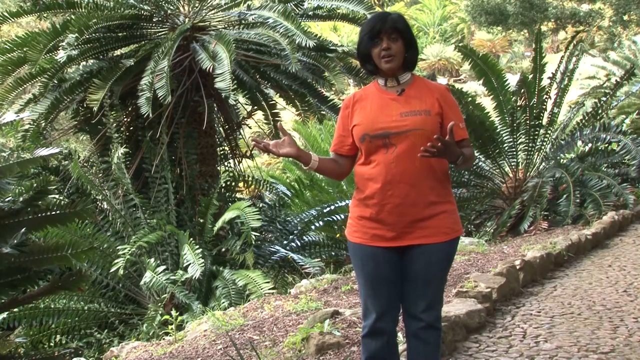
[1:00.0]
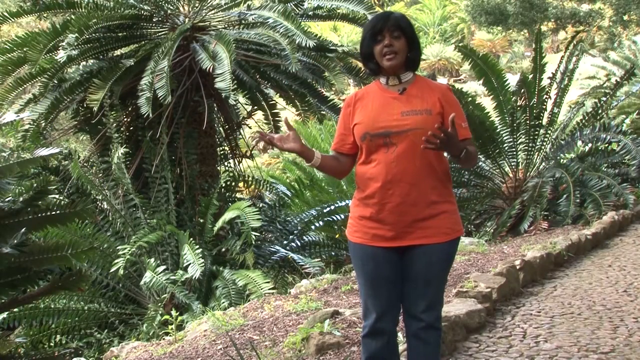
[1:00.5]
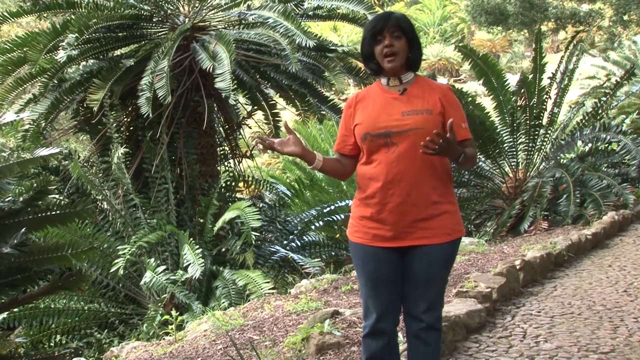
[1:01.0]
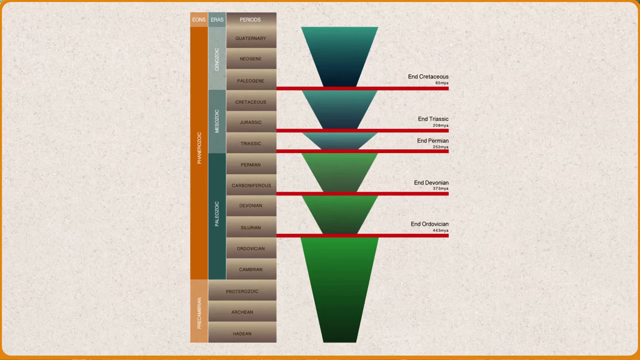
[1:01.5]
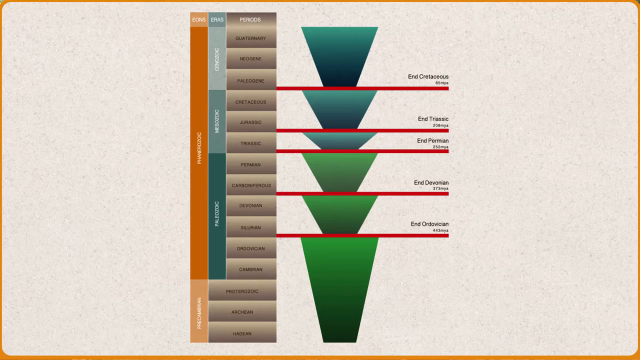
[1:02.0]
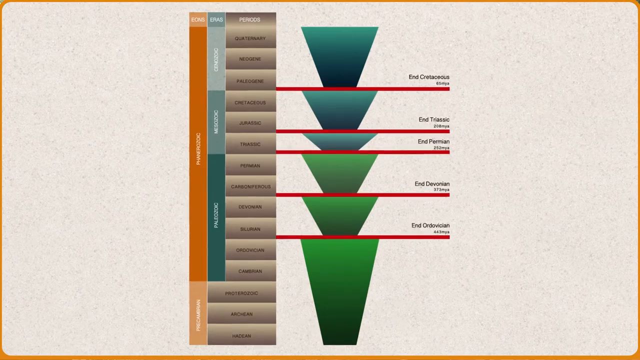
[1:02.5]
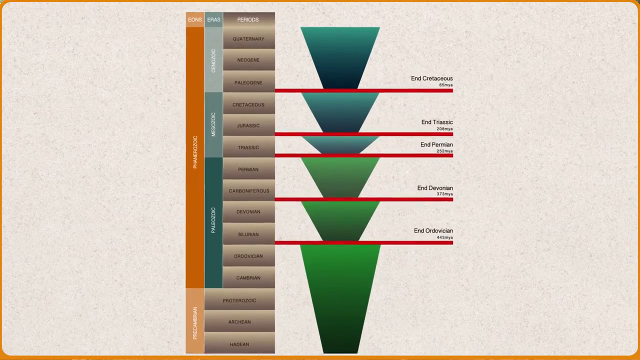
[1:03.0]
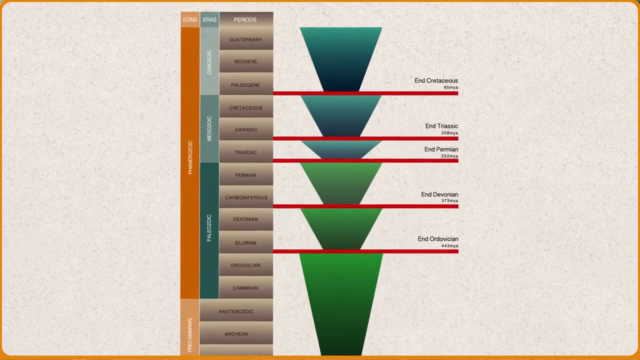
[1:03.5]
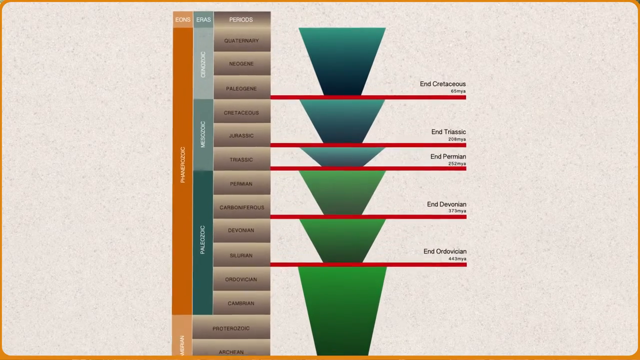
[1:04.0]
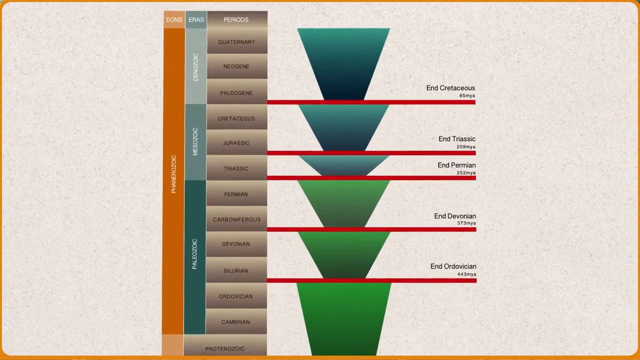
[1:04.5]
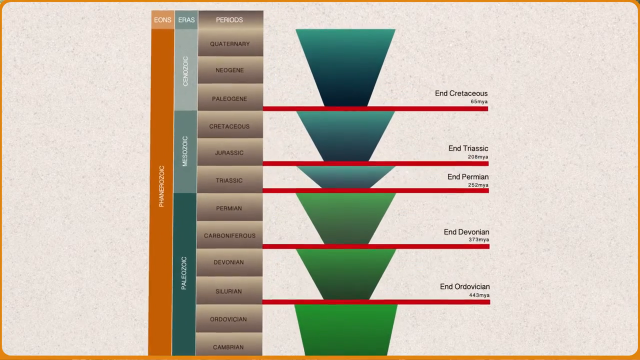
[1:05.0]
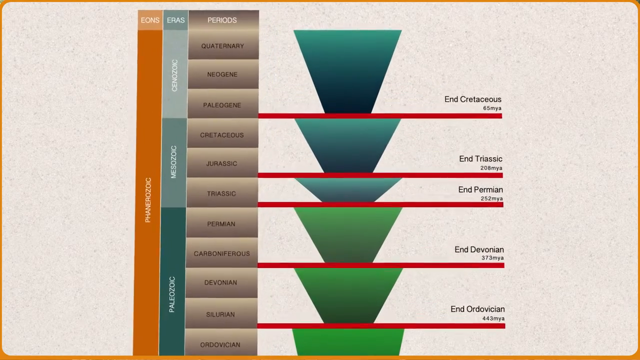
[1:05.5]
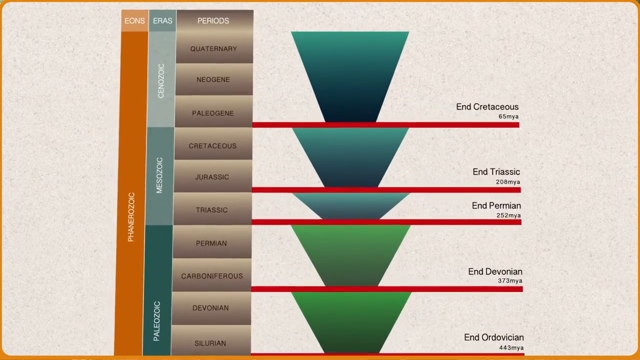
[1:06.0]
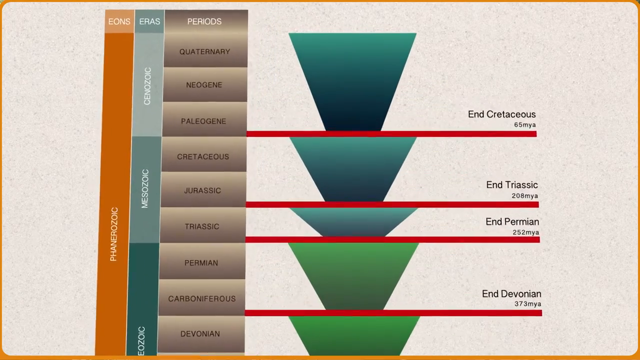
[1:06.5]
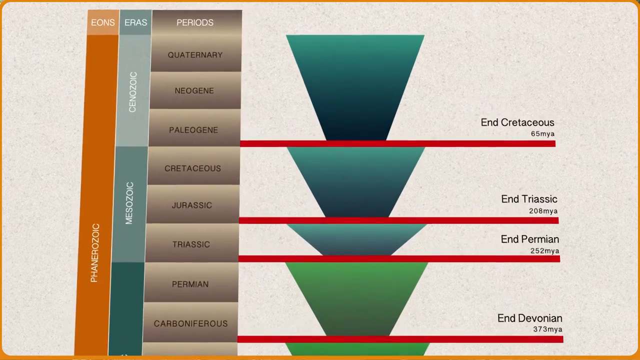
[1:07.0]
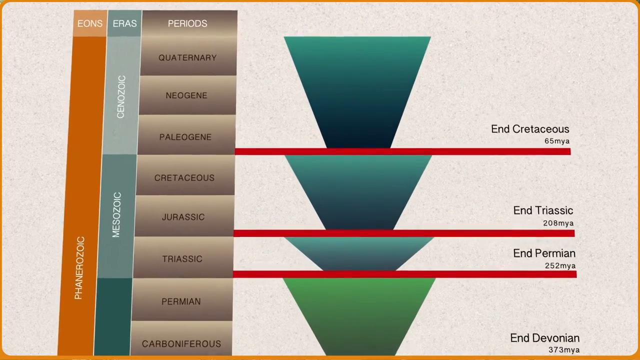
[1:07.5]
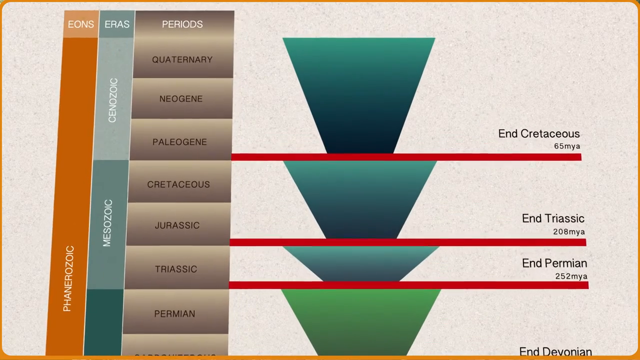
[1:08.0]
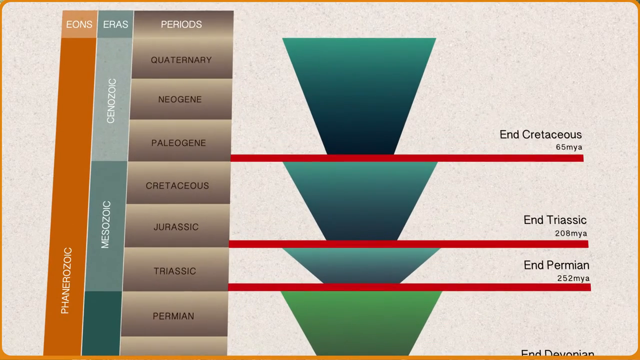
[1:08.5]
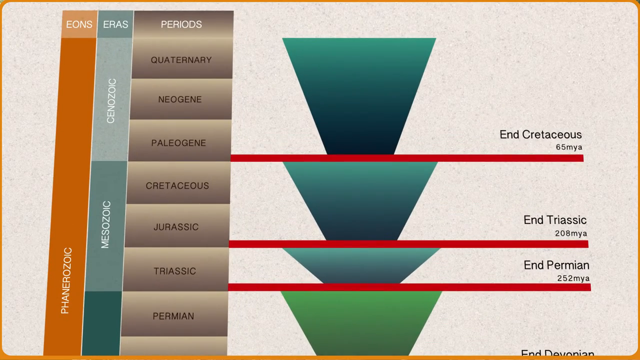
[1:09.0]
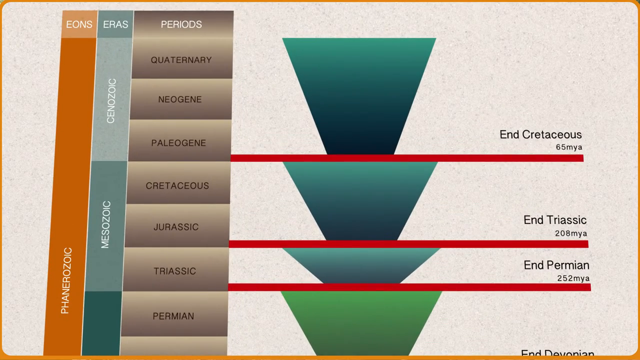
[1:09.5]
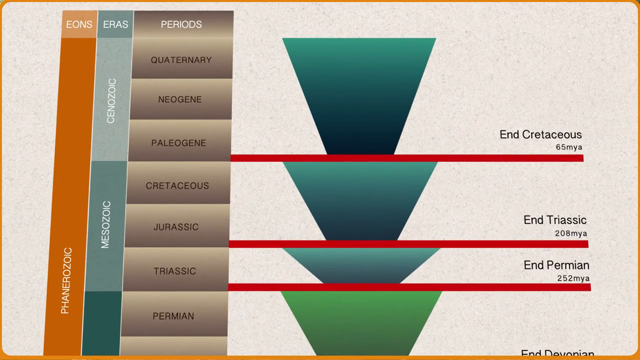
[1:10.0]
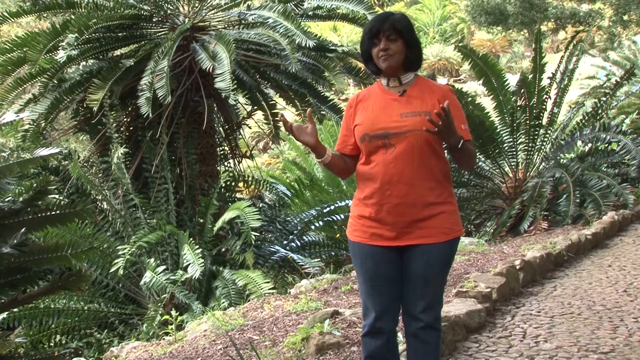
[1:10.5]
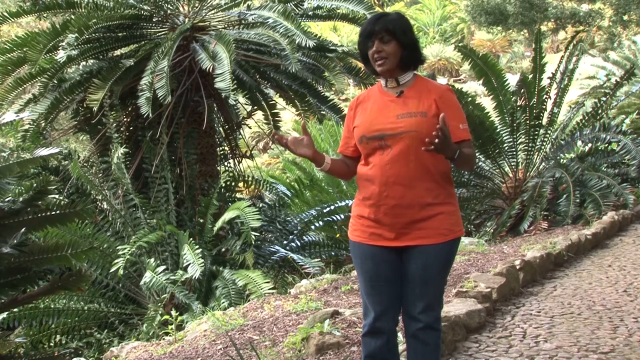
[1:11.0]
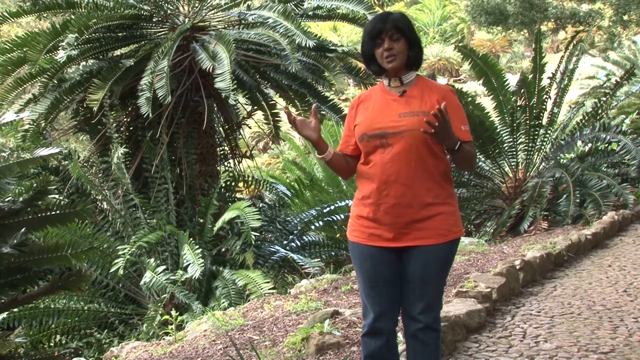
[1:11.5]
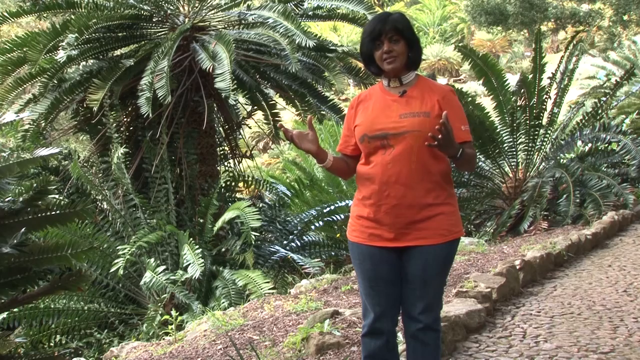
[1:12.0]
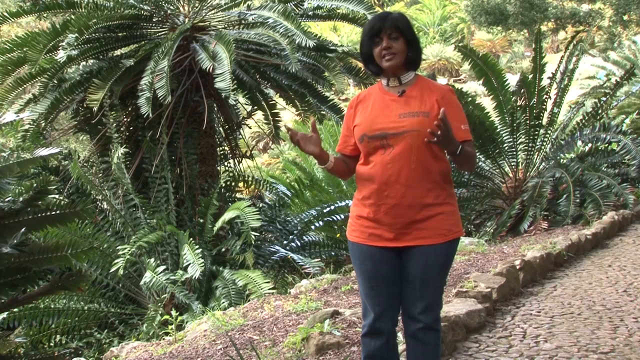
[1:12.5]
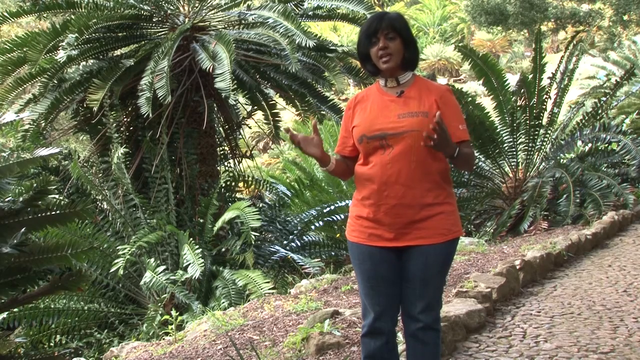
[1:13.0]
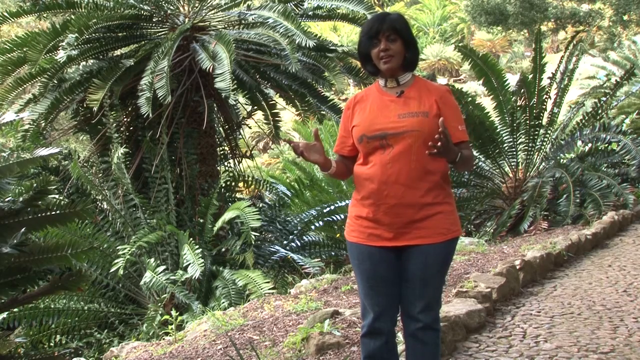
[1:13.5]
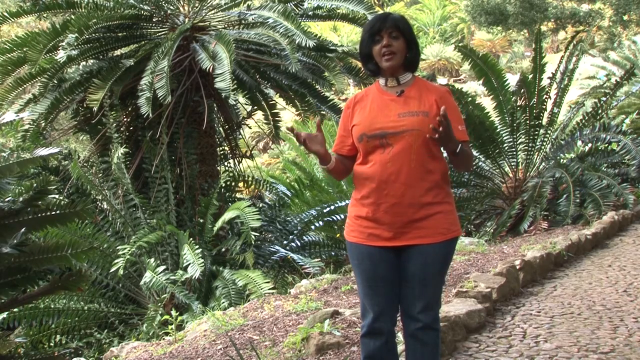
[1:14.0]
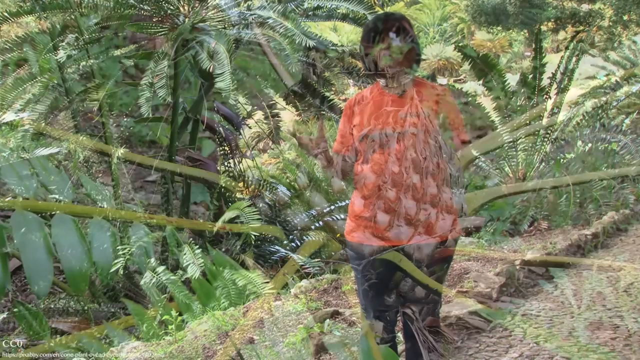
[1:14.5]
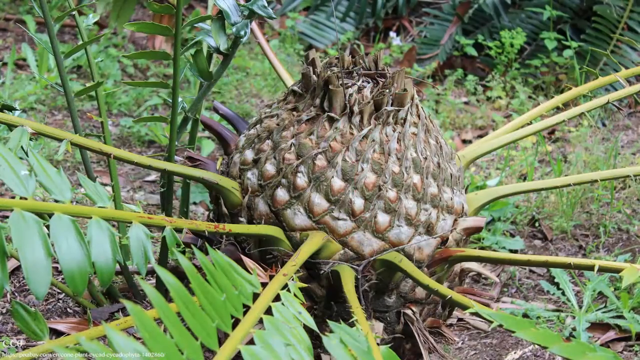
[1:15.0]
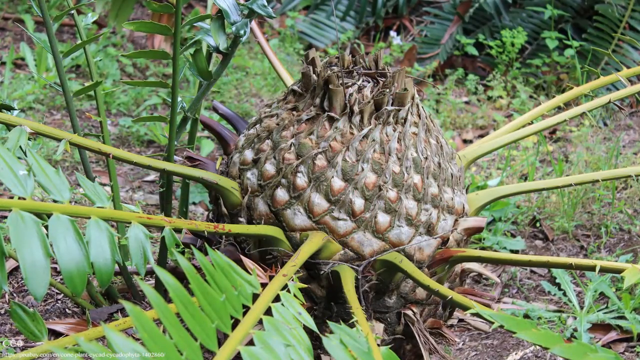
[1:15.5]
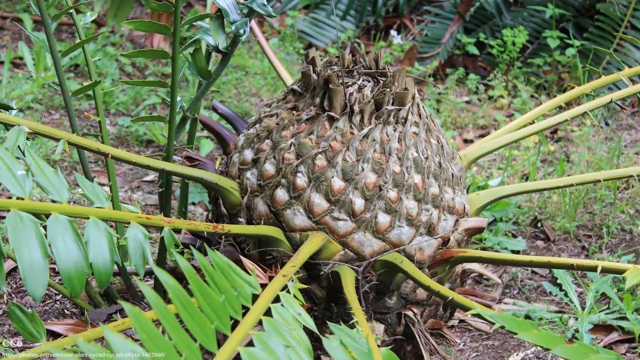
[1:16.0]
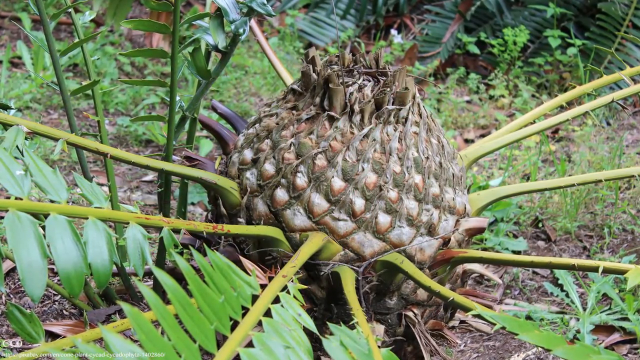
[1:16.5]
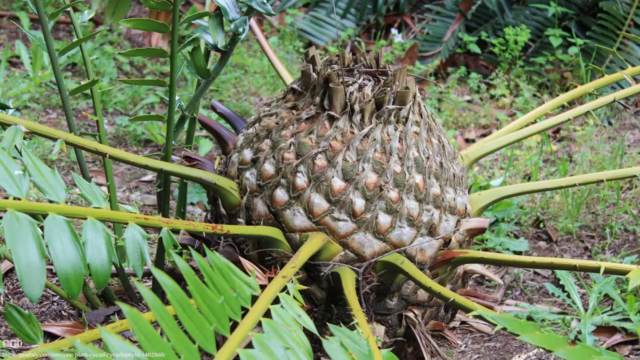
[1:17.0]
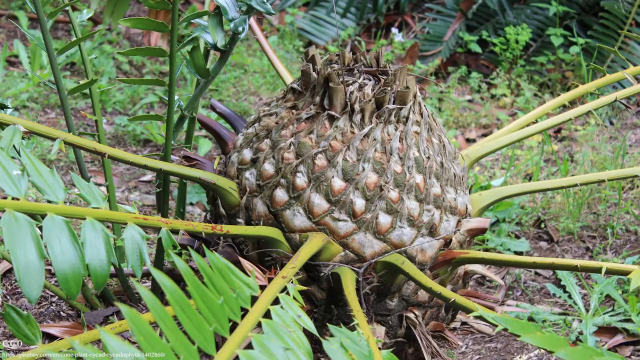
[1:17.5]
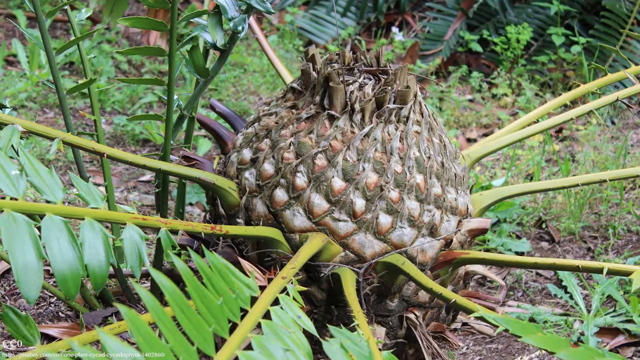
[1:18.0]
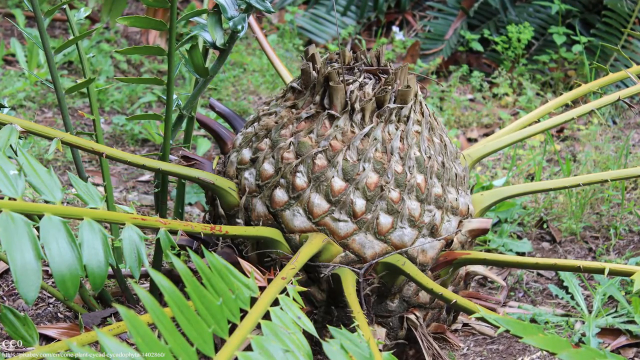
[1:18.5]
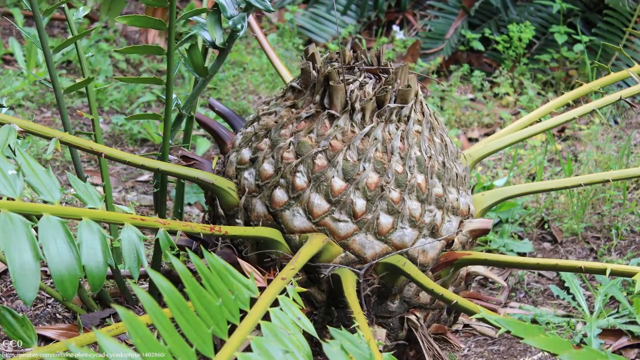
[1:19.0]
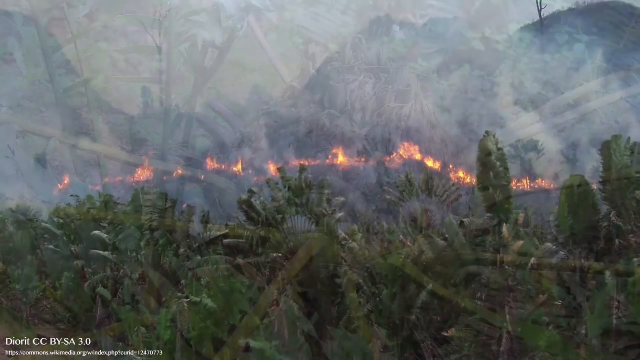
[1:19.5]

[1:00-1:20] A chart shows various periods and eras, and the eons seem to focus on one eon. Its eras are the Cenozoic and Mesozoic; the Cenozoic contains the Quaternary, Neogene and Paleogene periods, and the Mesozoic contains the Cretaceous, Jurassic and Triassic. Triassic and Permian periods are also listed. After the slide, the doctor is shown wearing an orange-ish, rose-colored shirt and sort of denim slacks. Then a sort of gymnosperm-type, frond-like tree is shown growing outside, with fronds coming up from a centralized cone-type area. A whole series of flame-like wildfires then seems to be burning in a forest area.